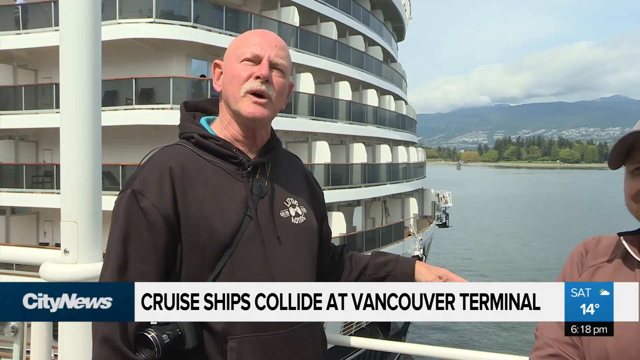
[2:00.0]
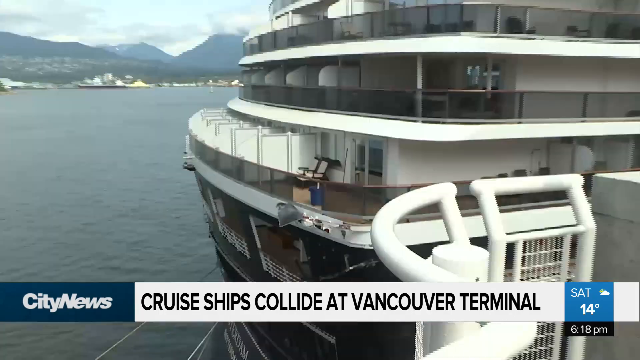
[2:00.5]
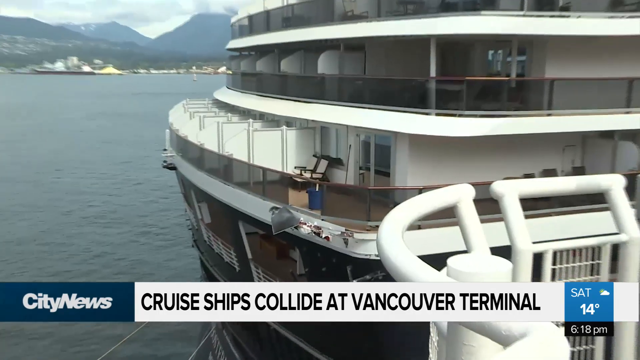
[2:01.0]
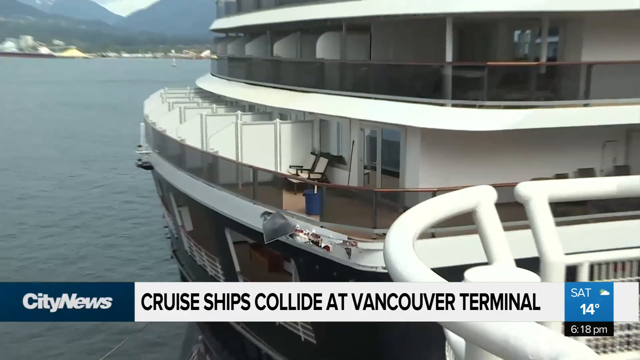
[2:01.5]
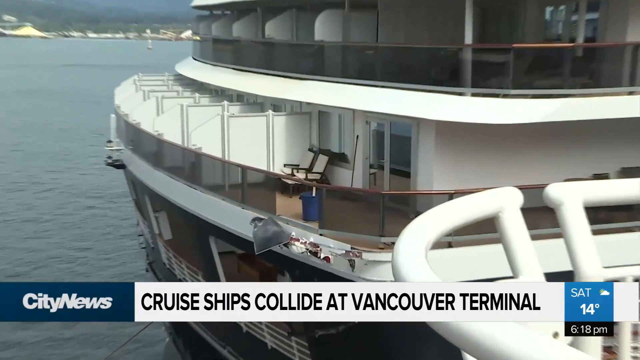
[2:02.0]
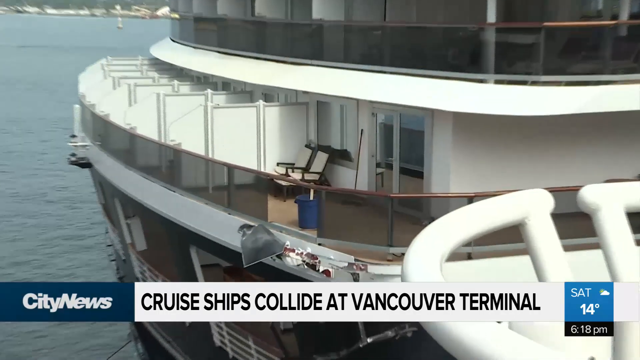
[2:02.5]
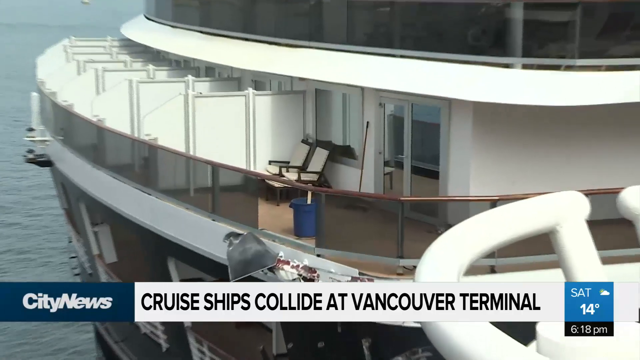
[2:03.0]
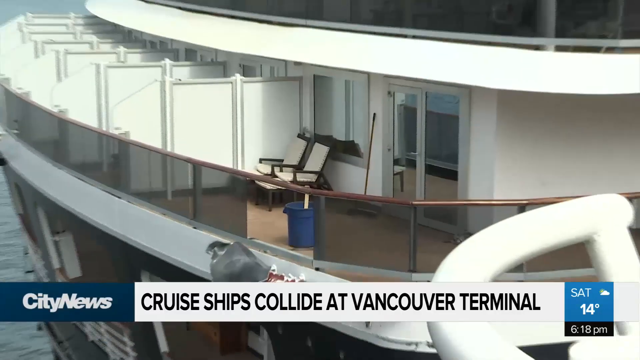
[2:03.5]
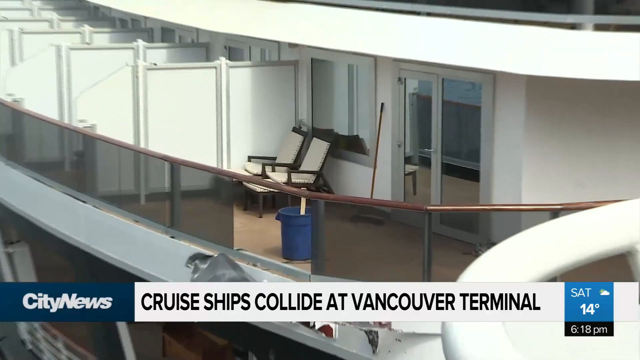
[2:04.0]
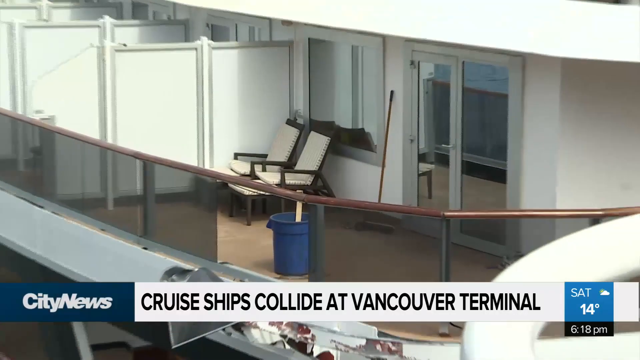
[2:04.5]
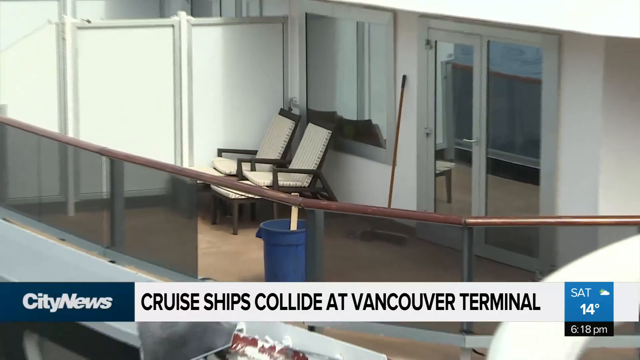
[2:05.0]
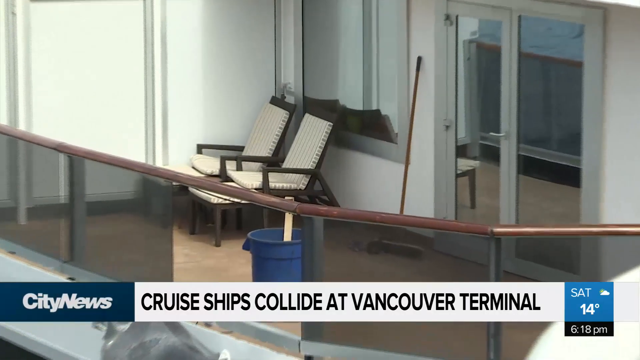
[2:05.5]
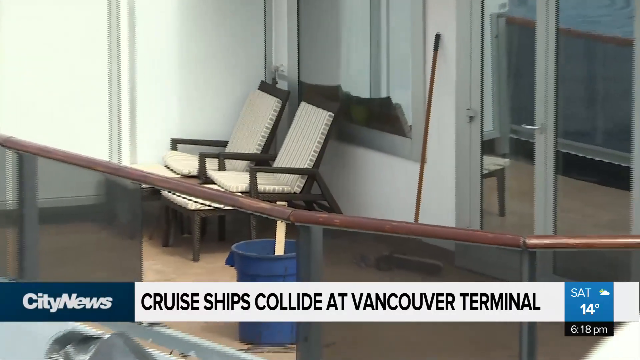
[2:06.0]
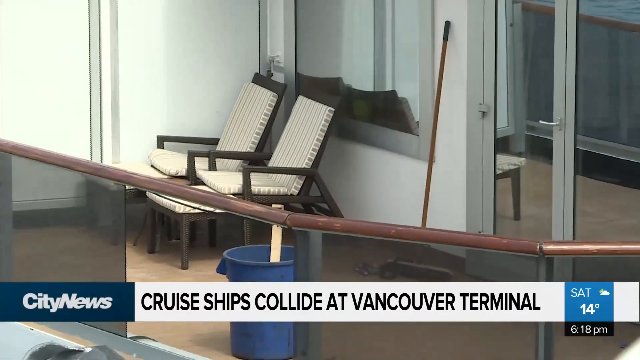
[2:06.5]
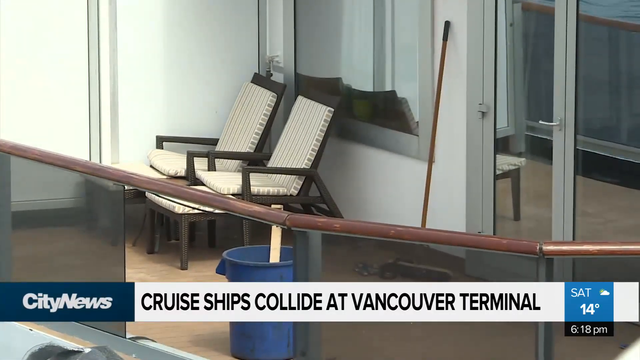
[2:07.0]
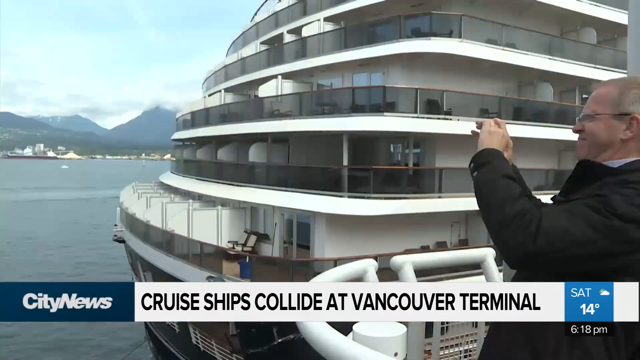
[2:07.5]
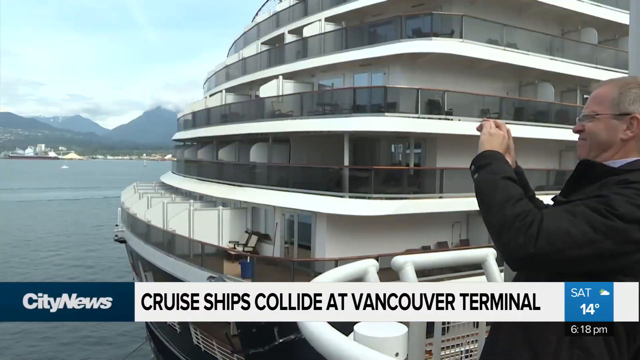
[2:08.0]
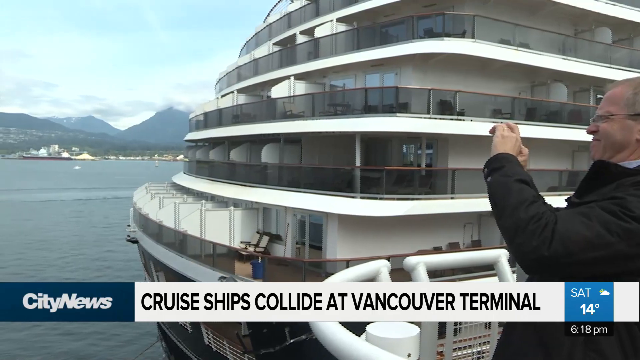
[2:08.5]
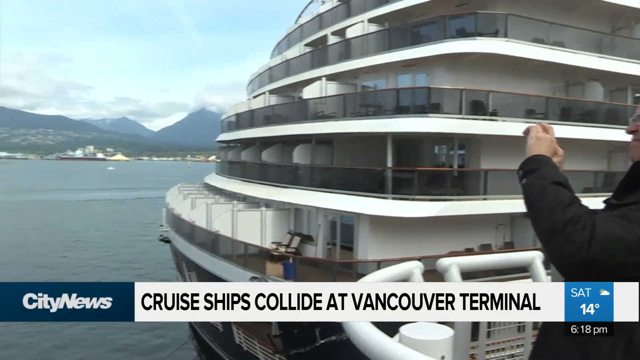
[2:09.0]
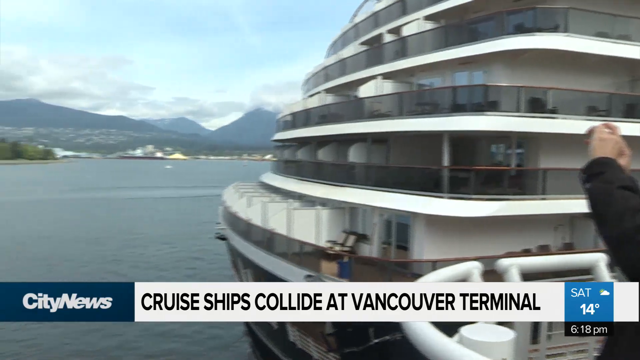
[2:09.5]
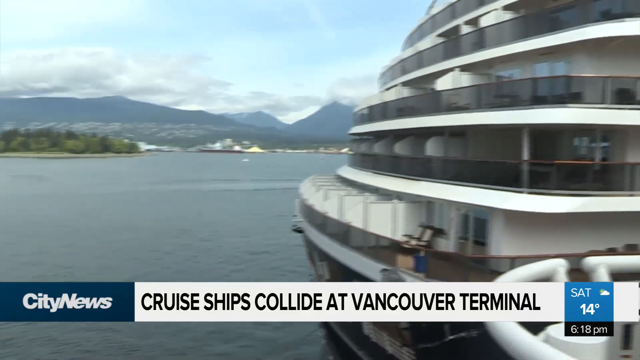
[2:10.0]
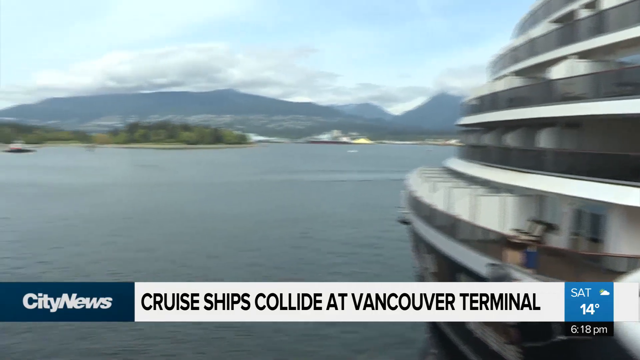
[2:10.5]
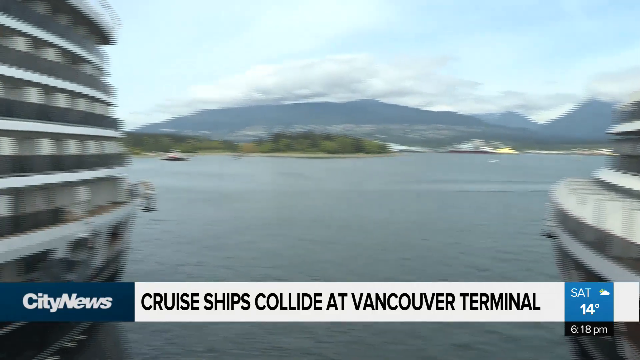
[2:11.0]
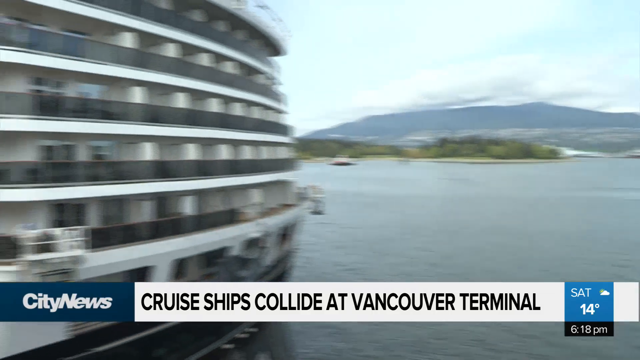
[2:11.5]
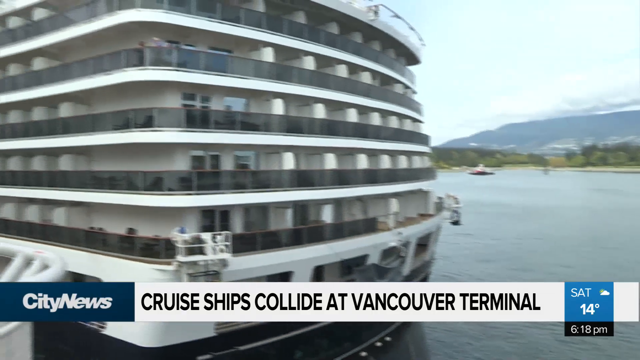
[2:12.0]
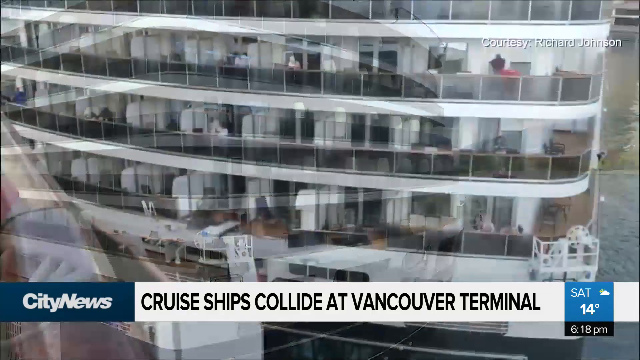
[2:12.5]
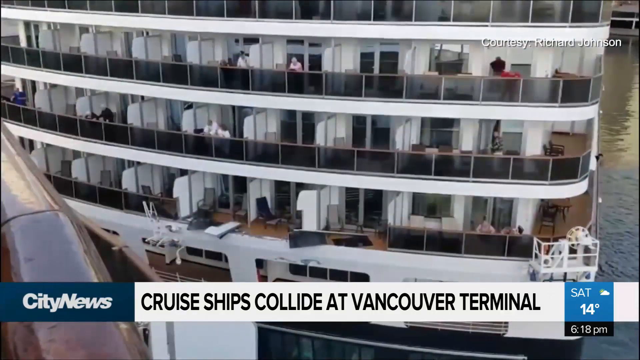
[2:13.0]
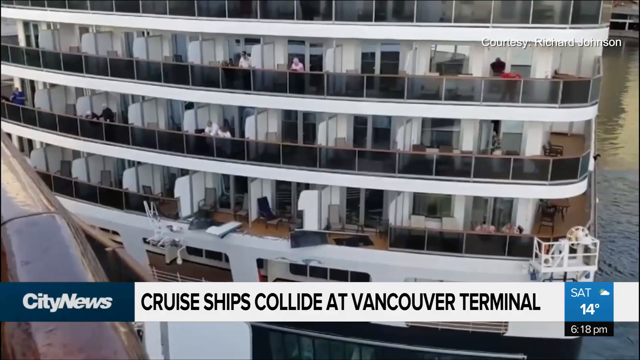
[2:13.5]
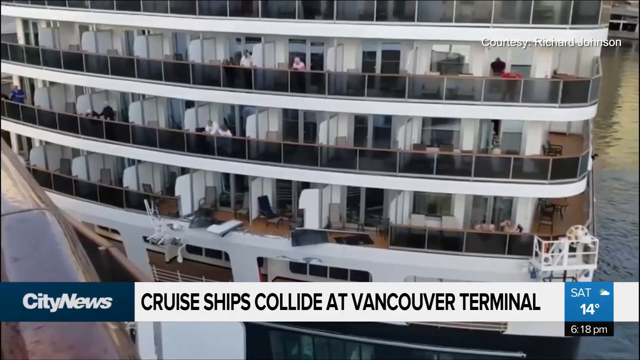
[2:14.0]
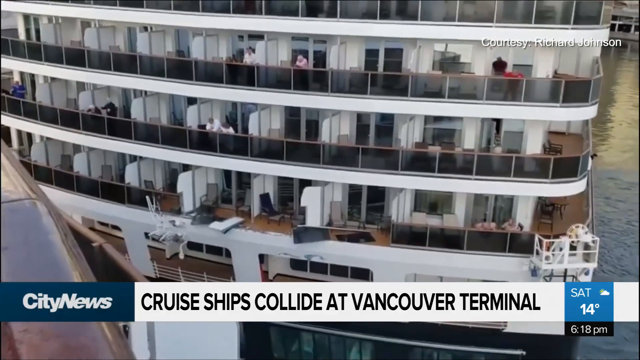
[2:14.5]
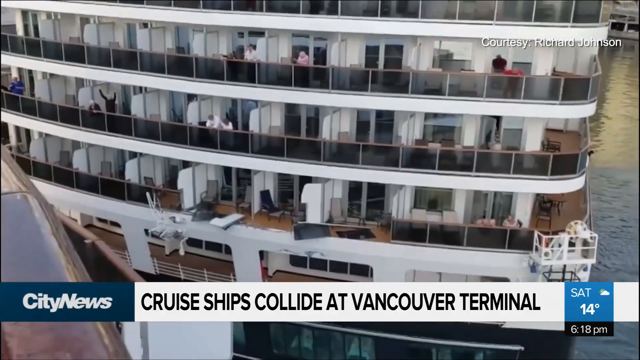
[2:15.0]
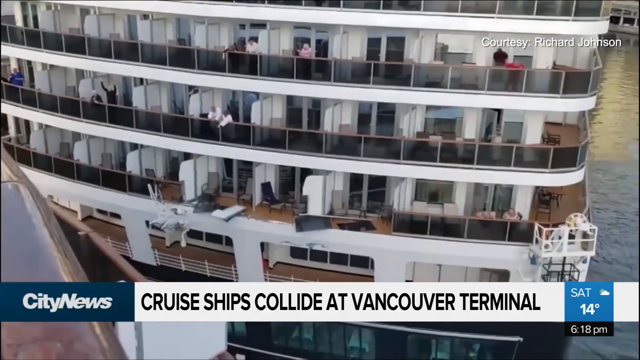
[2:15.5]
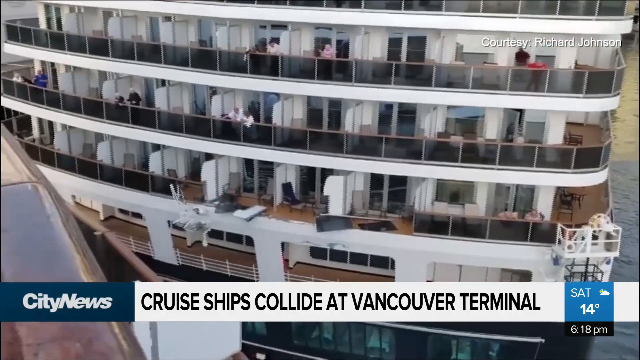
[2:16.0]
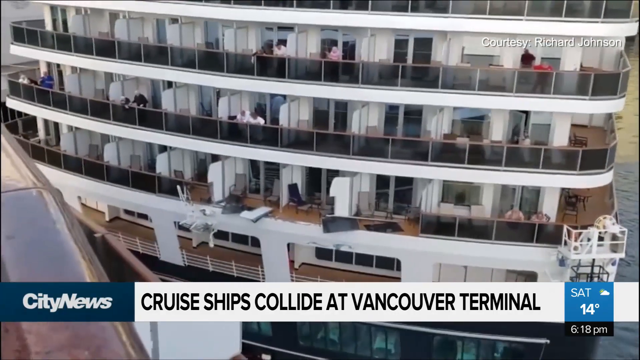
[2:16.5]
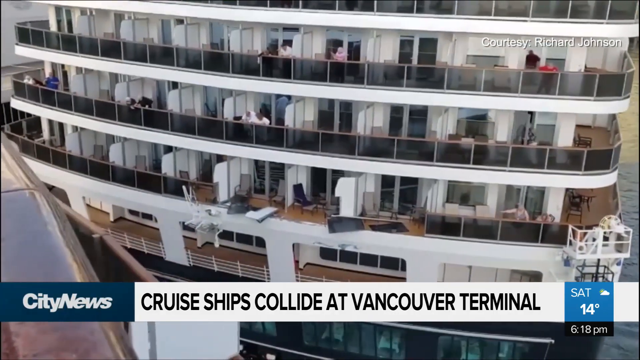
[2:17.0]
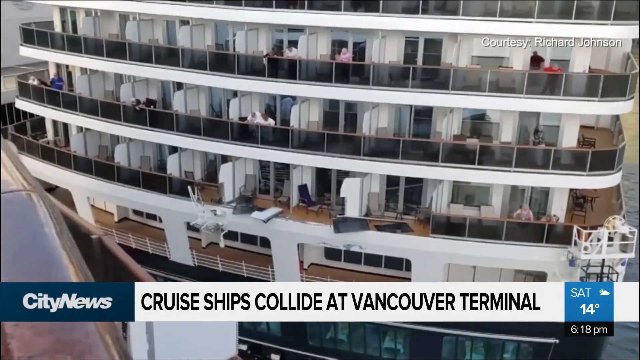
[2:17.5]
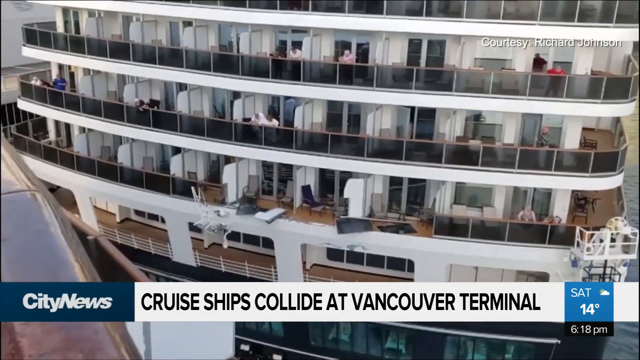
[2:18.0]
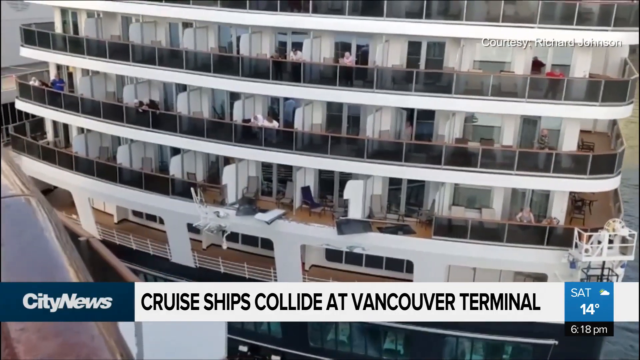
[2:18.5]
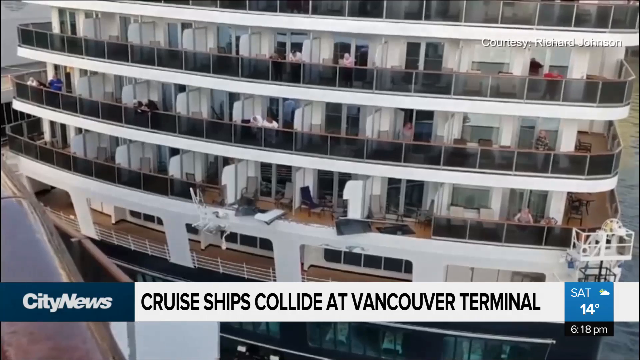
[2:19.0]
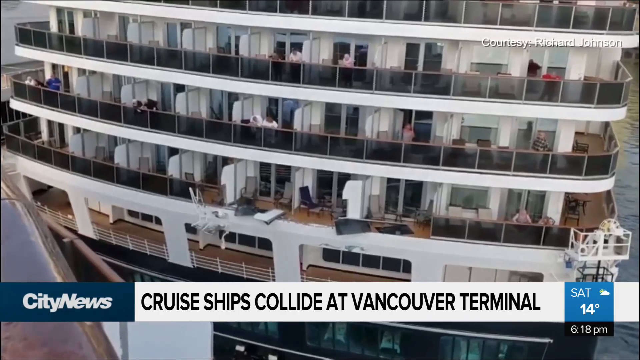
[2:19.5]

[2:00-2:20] The interview with Derby Shire ends after a couple of seconds. The video then shows a slow zoom onto the back of the cruise ship, focusing on the lowest level, where there is slight damage to the back of the boat and some damage to the hull, nothing too bad. The banner beneath reads "cruise ships collide at Vancouver terminal". The camera continues zooming in on a pair of deck chairs on the back of the boat. It then cuts to a man on a nearby dock taking photos of the damaged cruise ship as it slowly drifts away. A second cruise ship is within view and does not appear to be damaged; people on that boat watch from its observational rails as the boat drifts away.